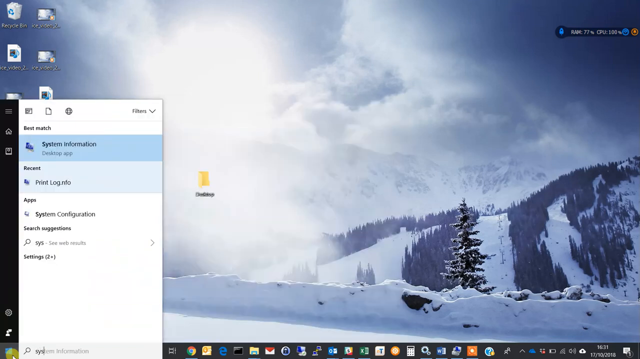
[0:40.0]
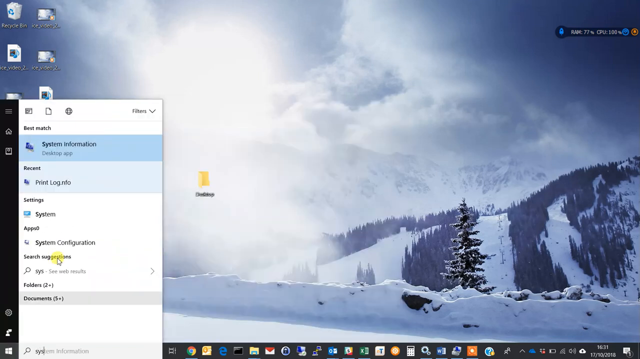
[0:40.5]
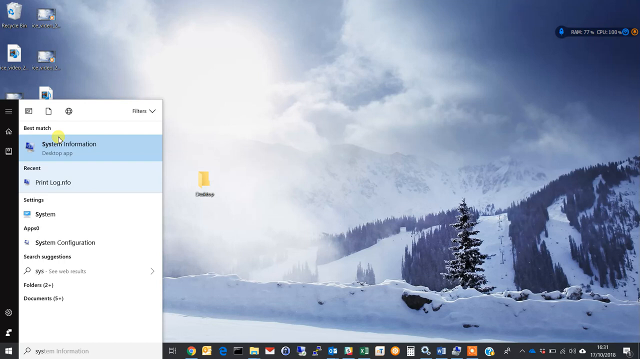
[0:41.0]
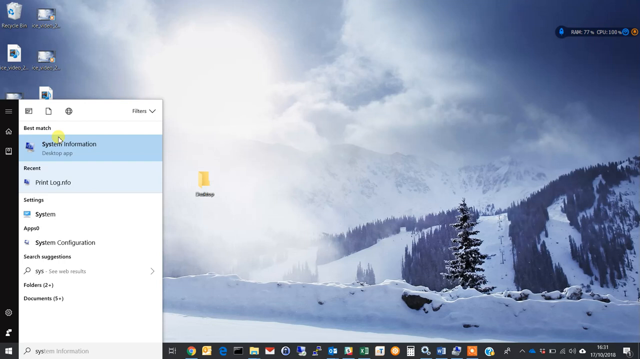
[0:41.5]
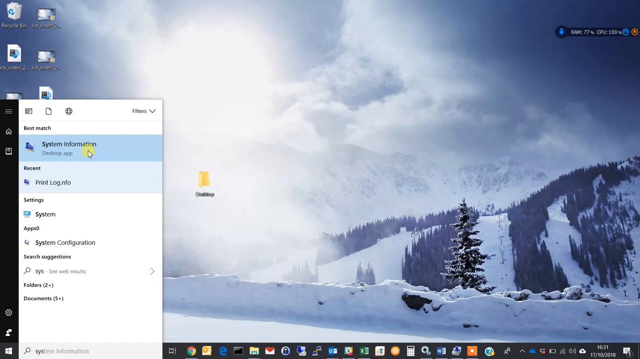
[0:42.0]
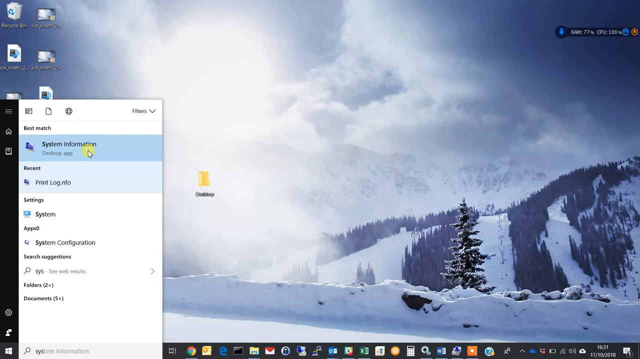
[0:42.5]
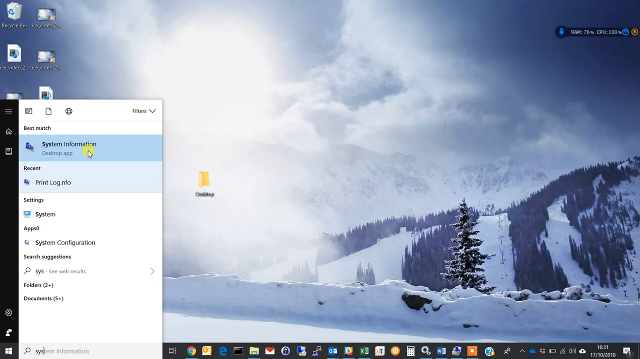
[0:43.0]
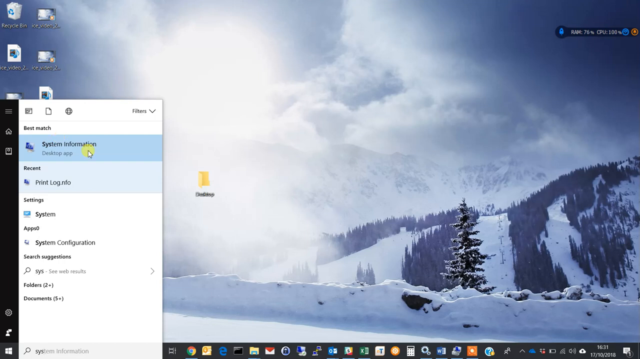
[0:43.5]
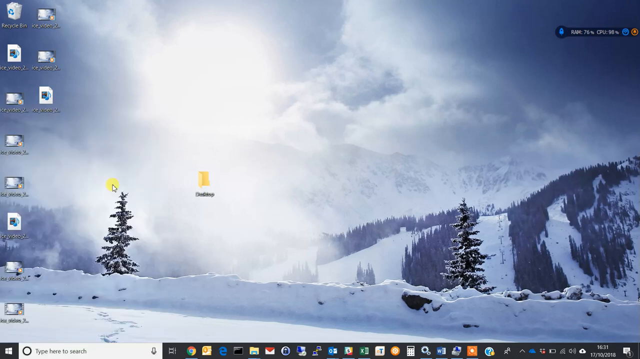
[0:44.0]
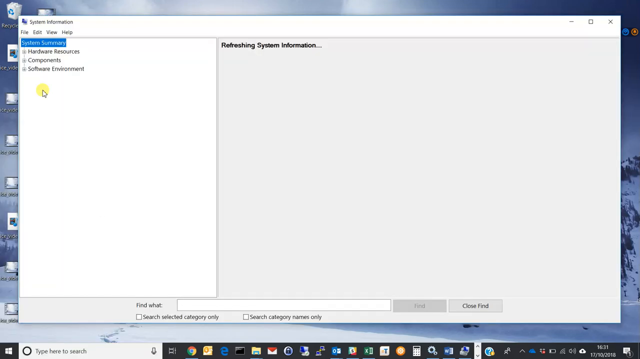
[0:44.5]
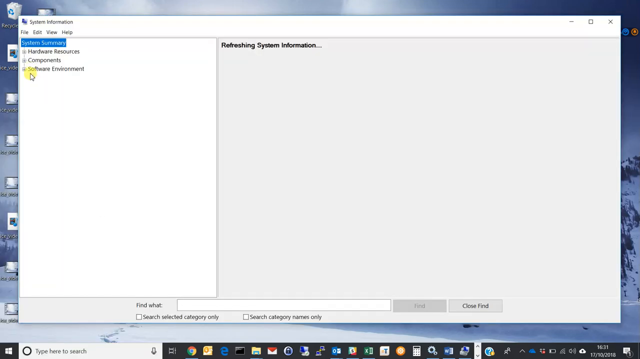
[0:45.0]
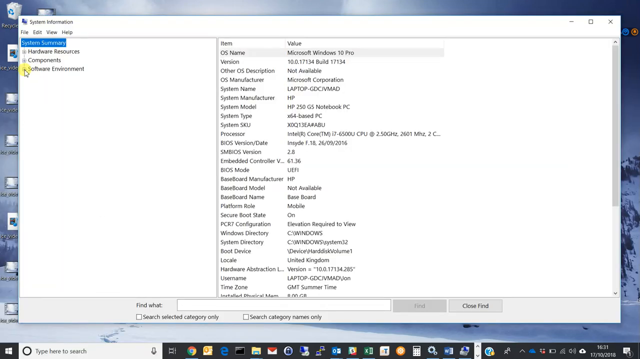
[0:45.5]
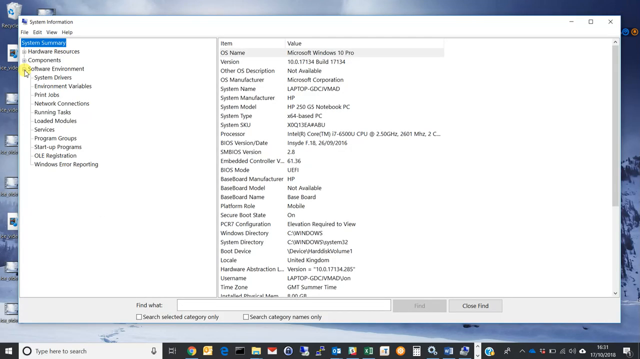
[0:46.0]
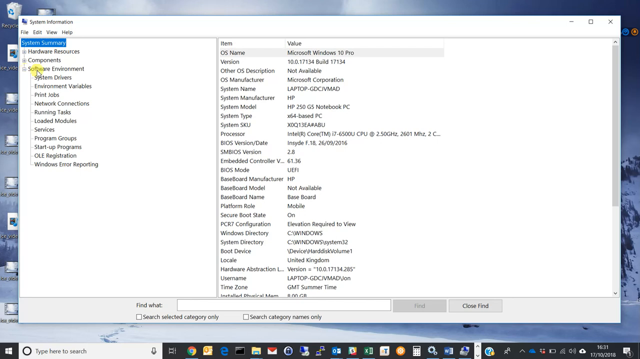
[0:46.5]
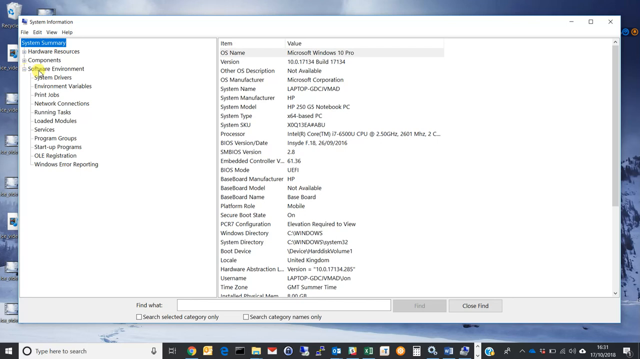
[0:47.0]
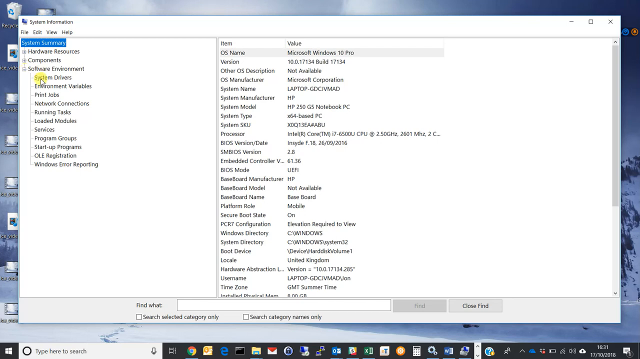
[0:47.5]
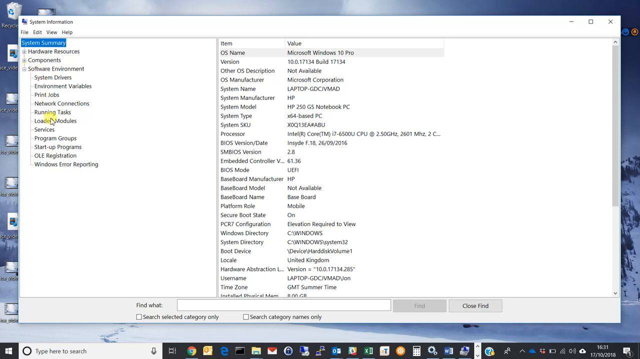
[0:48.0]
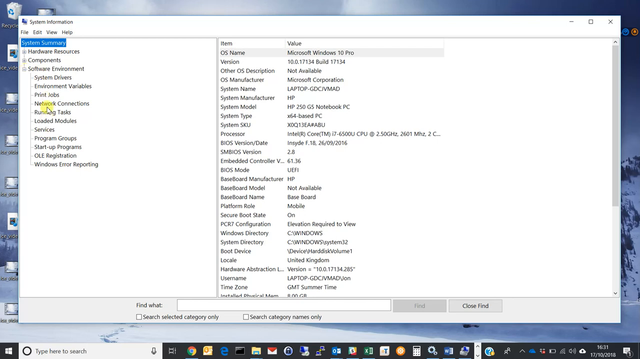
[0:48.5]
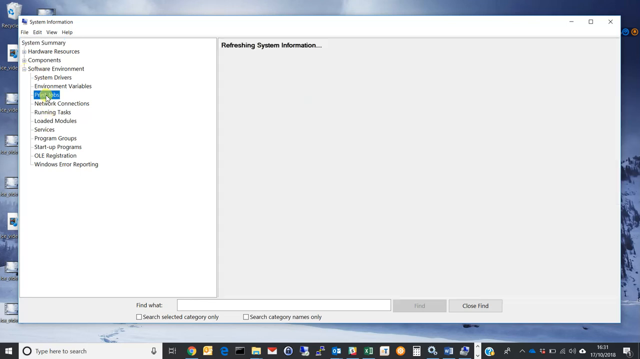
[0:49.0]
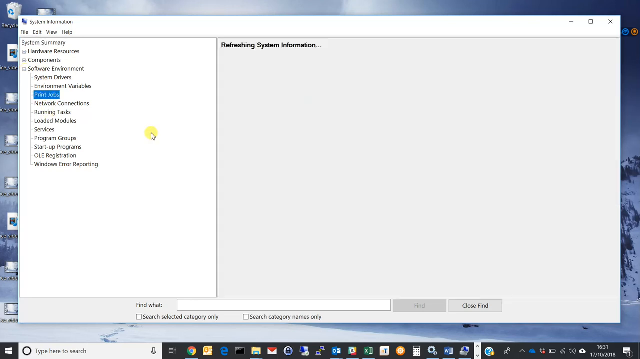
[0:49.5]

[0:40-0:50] The mouse cursor clicks the System Information option in the Start menu. The user appears to open the software environment section of the system properties, where the print log is located. As the mouse moves around, various options appear in the System Information panel; the cursor goes up and down across a few of them, as if searching, before landing on and clicking the section labeled "print jobs".